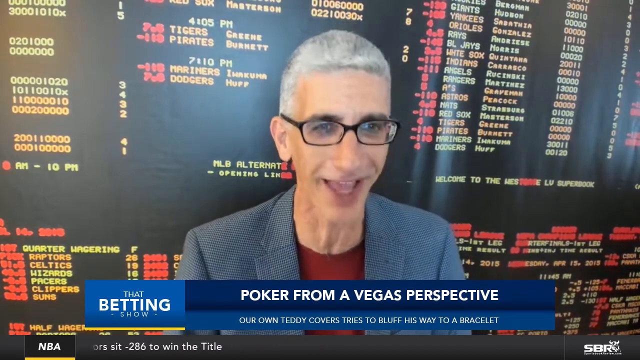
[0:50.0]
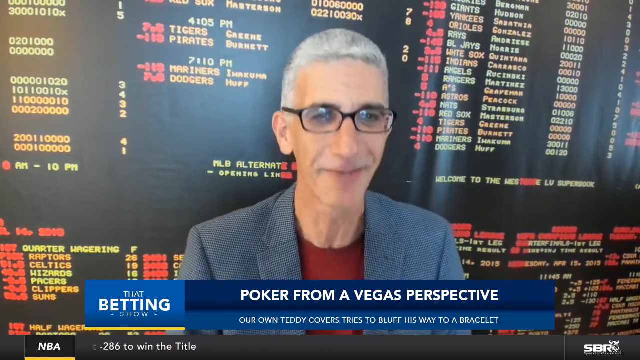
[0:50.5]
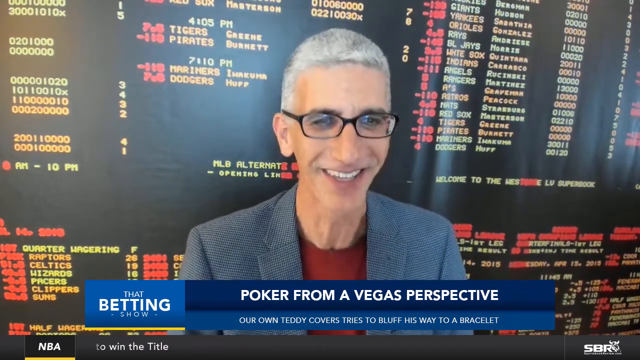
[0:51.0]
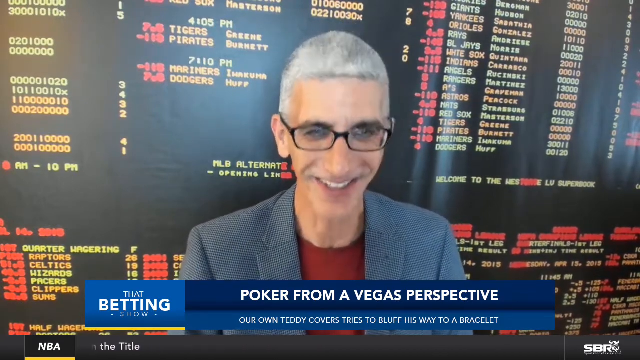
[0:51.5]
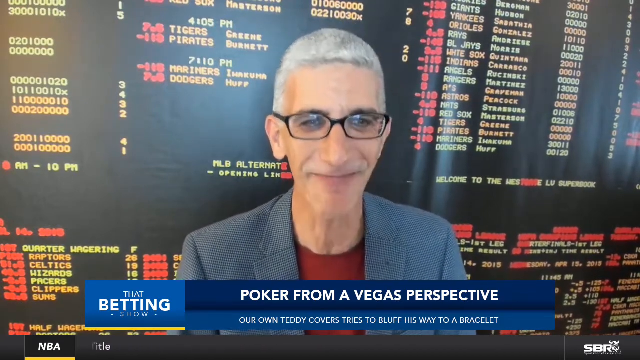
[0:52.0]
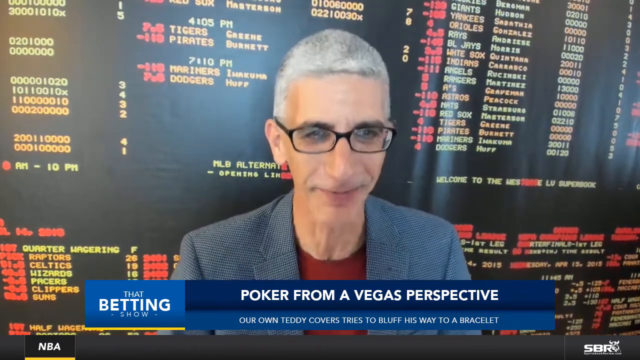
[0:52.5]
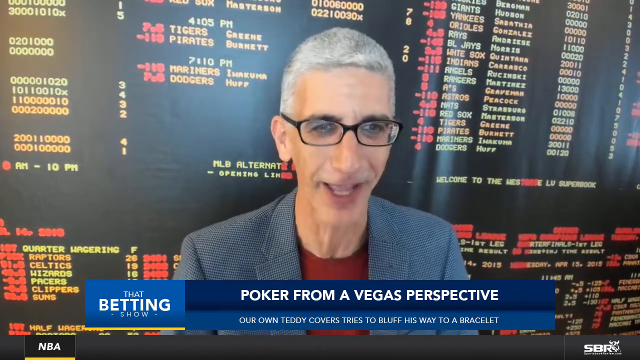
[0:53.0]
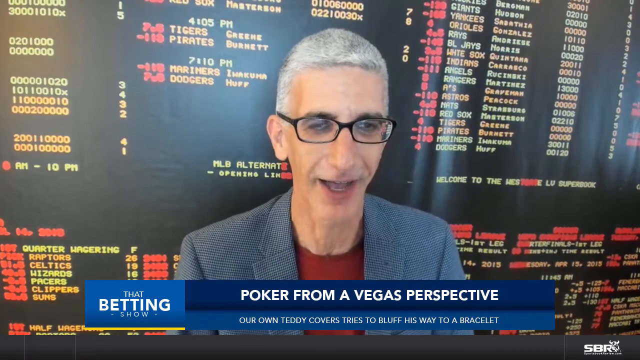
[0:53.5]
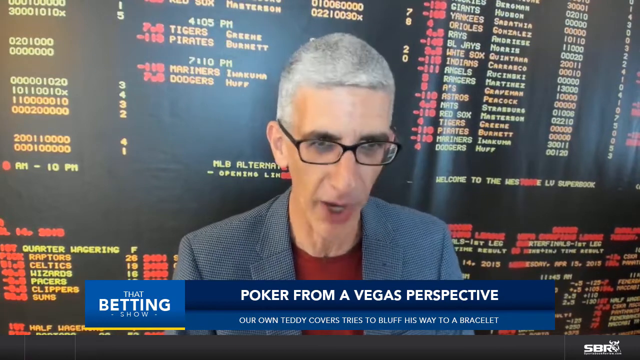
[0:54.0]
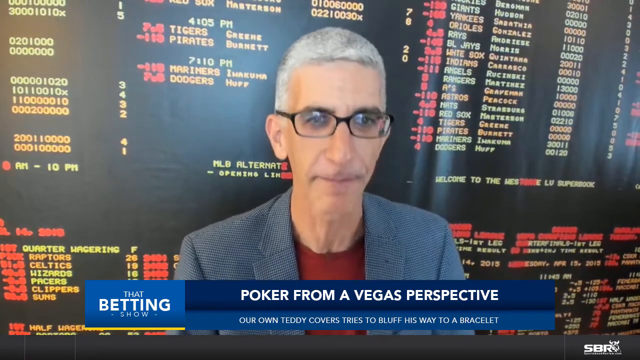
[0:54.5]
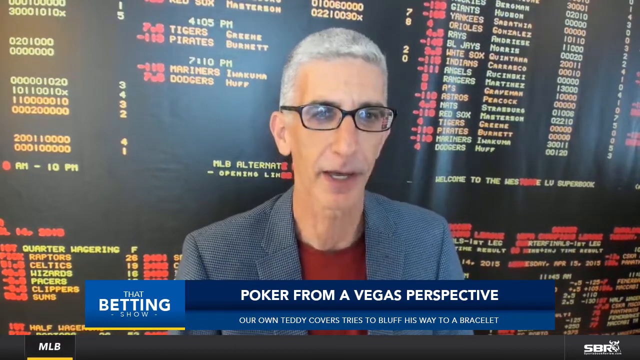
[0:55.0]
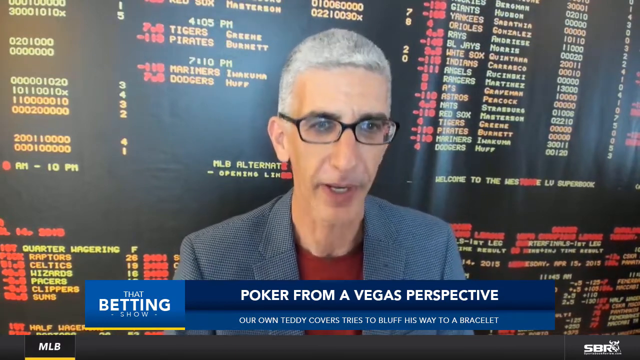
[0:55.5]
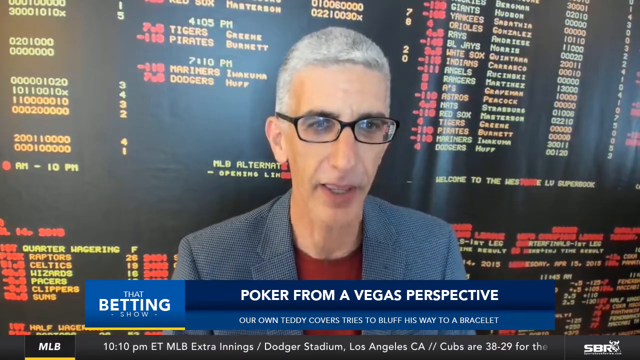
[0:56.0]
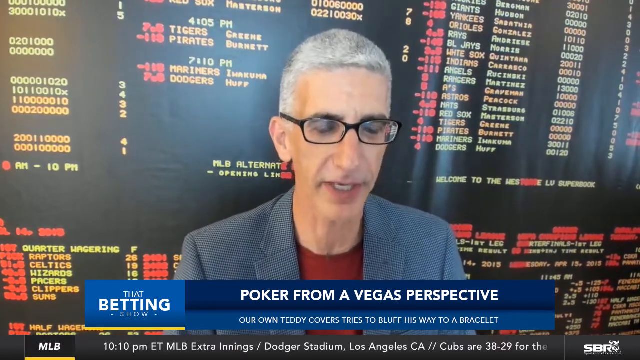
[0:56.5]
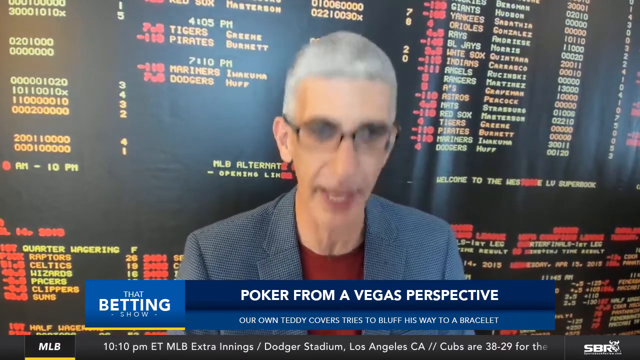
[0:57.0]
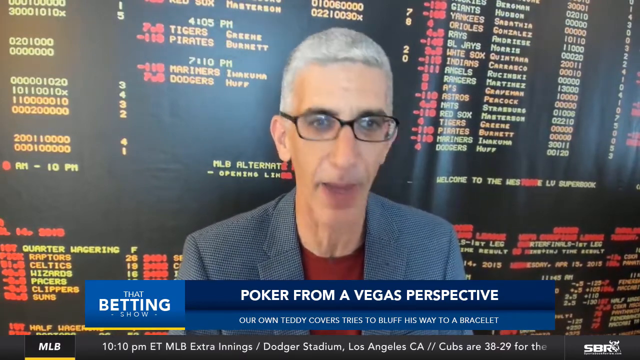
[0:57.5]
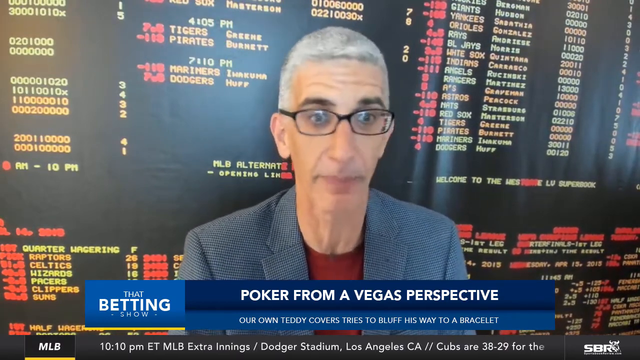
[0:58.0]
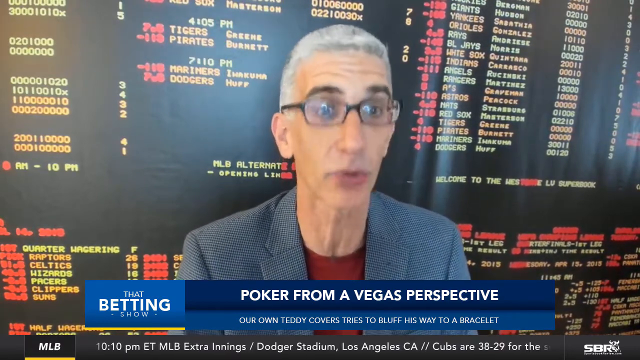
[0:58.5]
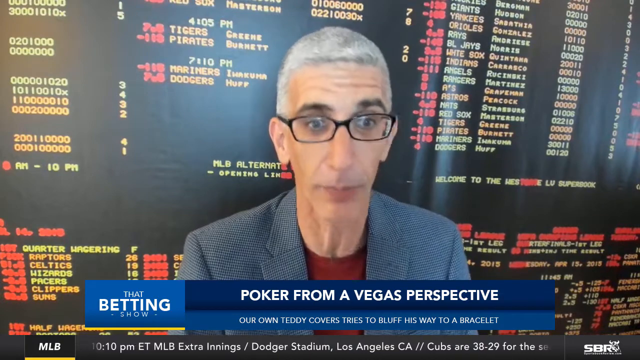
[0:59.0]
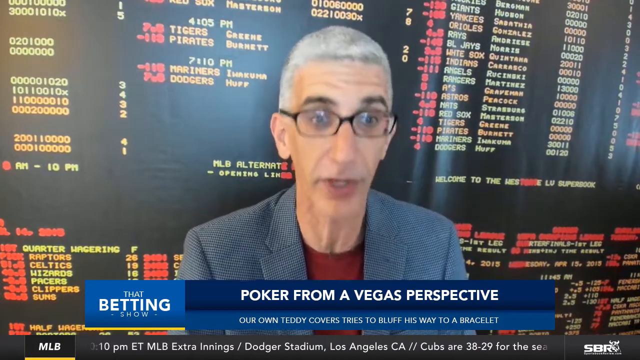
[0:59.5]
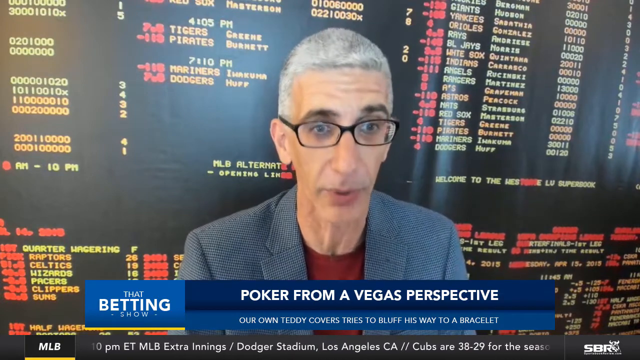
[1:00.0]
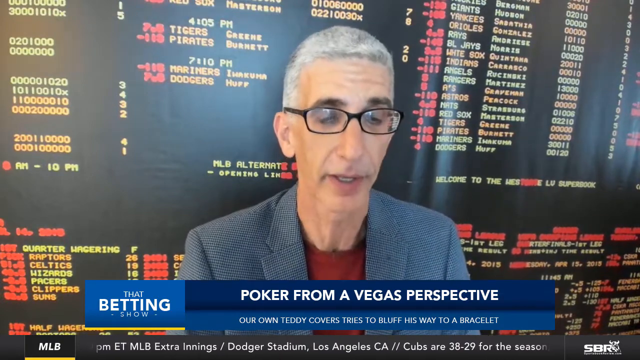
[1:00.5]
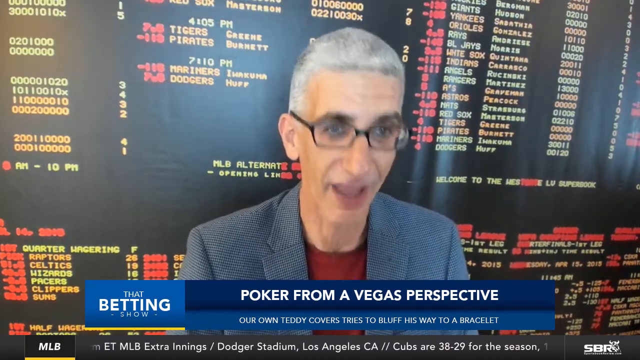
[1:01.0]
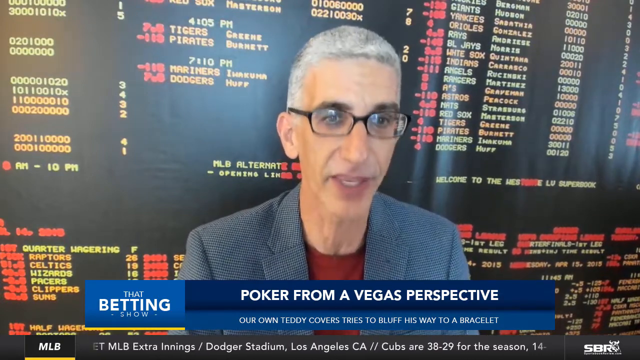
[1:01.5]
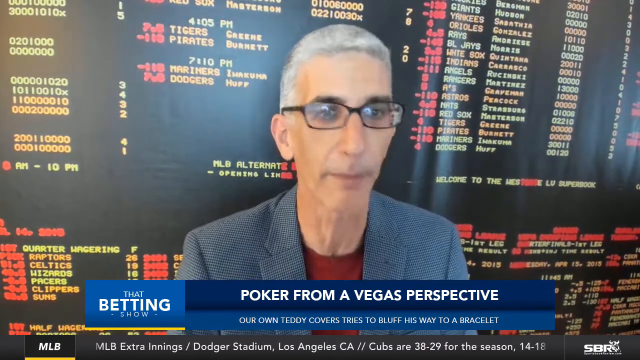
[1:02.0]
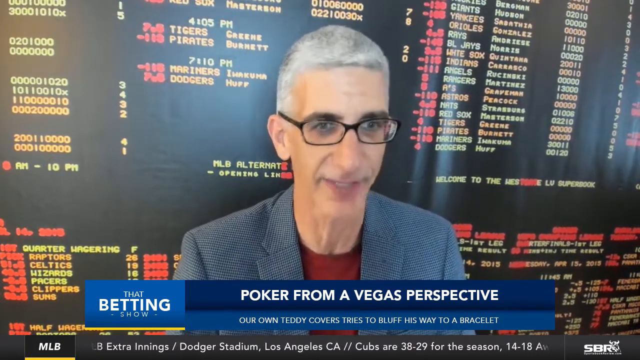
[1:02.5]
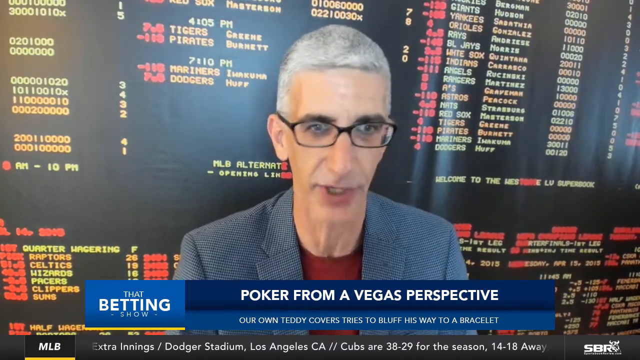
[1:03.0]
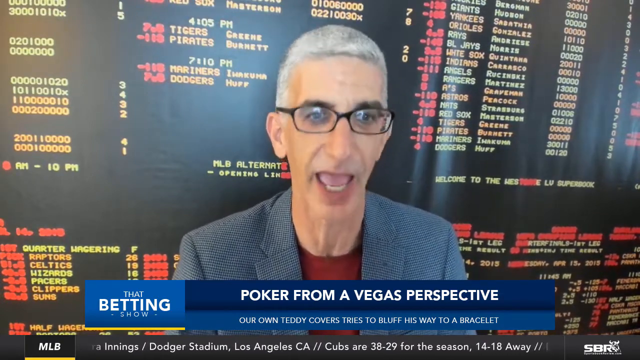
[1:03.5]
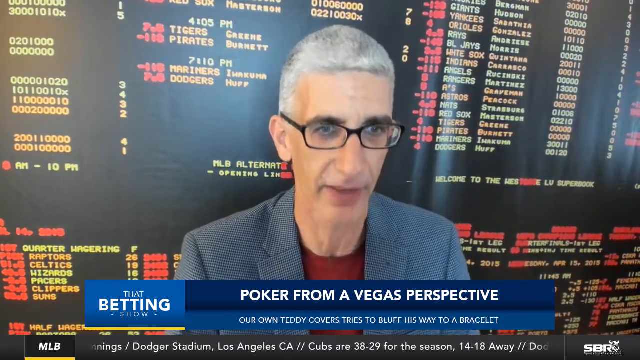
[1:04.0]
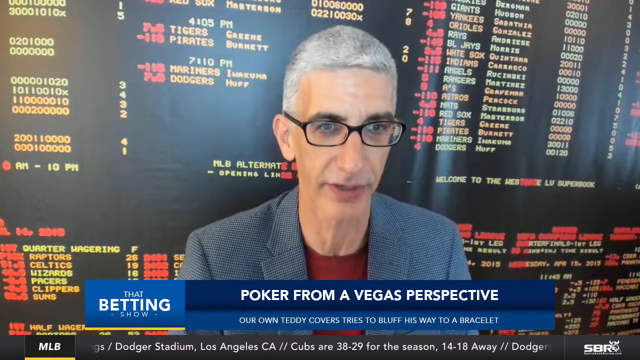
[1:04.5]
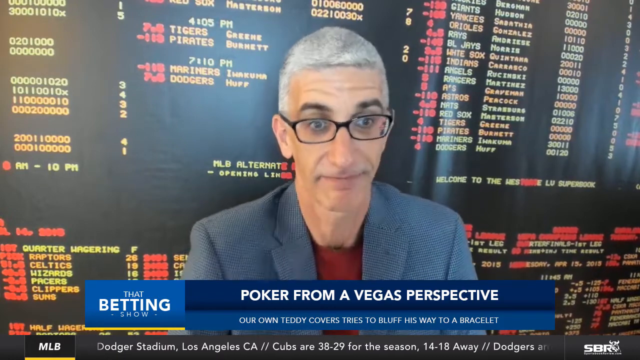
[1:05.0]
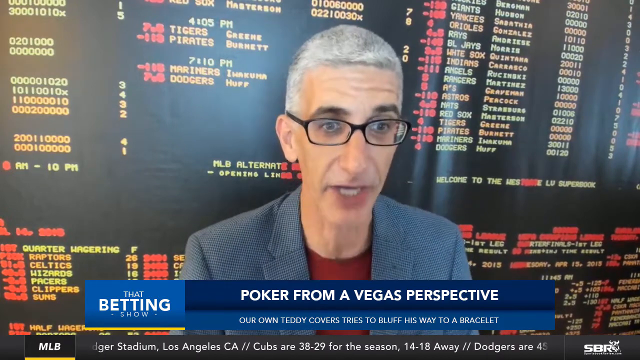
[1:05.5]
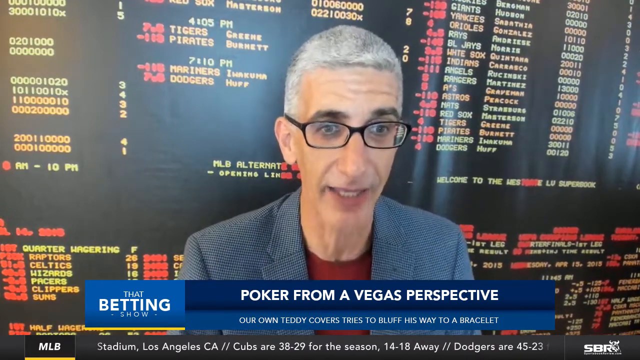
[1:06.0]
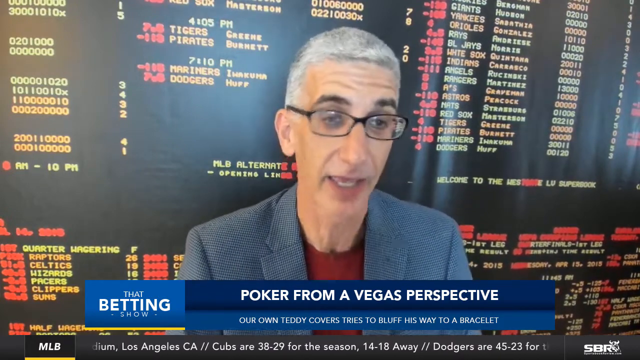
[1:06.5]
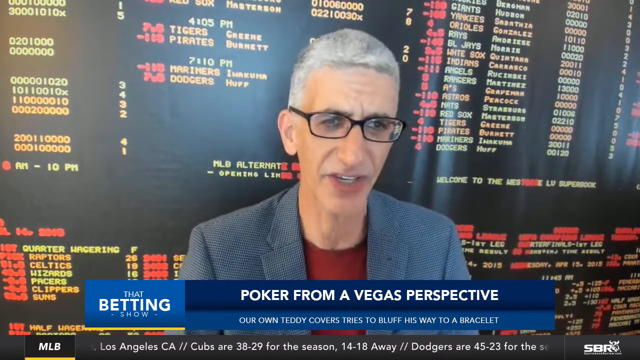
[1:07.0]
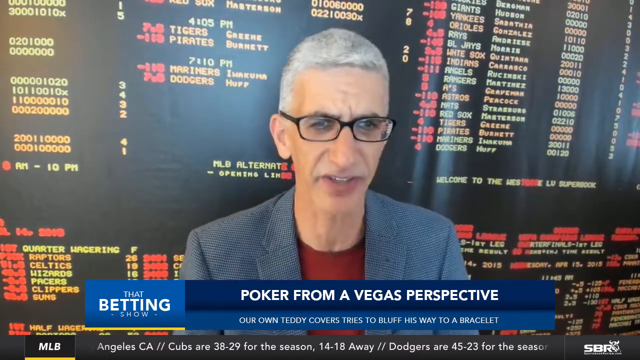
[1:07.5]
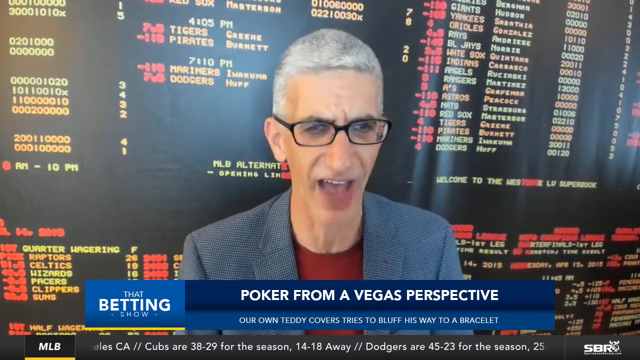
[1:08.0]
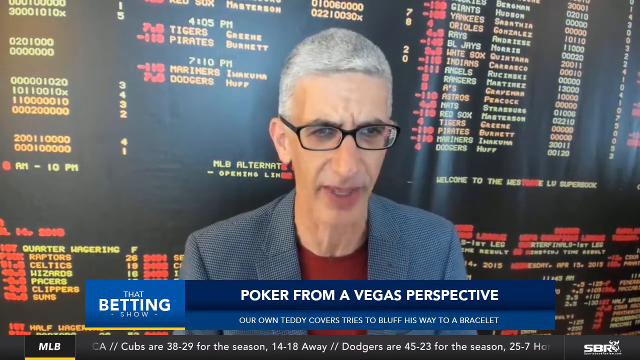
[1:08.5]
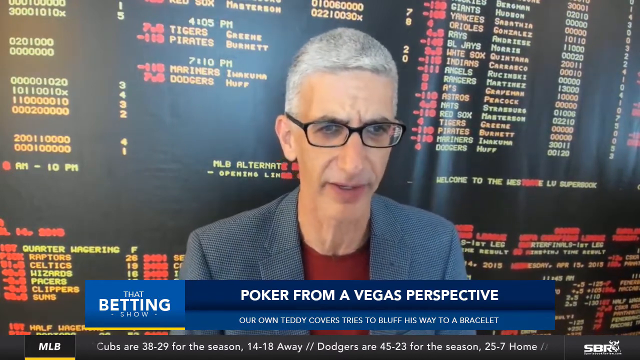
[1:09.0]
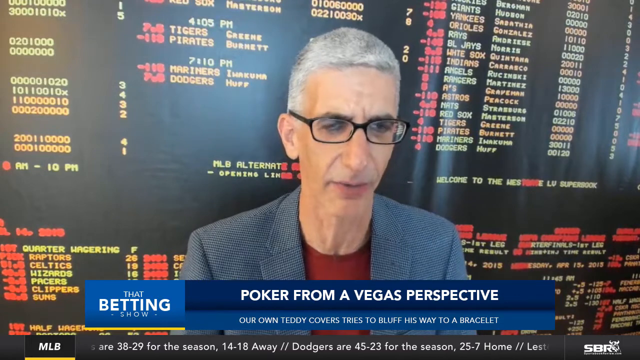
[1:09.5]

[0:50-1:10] The skinny man with glasses keeps talking, looking like he is talking fast, kind of animated, nodding his head forward quickly. The graphic below him still says "Poker from a Vegas perspective", and smaller text says "Our own Teddy Covers tries to bluff his way to a bracelet", suggesting that Teddy Covers may be his name, probably a nickname. The crawl at the very bottom has shifted on the left to "NBA" and then "MLB", with information about what to expect tonight, such as "Cubs are 38-29 for the season, 14-18 away" and "Dodgers are 45-23 for the season". Only the skinny man in the gray jacket is seen, talking in front of the screen, which is static, its numbers not changing. There is a lot of red: the betting numbers appear to be in red, the teams in yellow, and some other numbers in white.